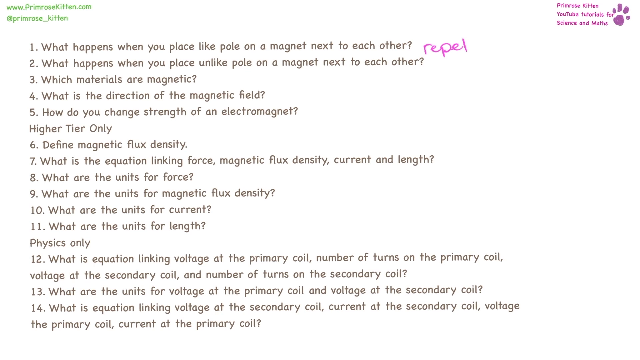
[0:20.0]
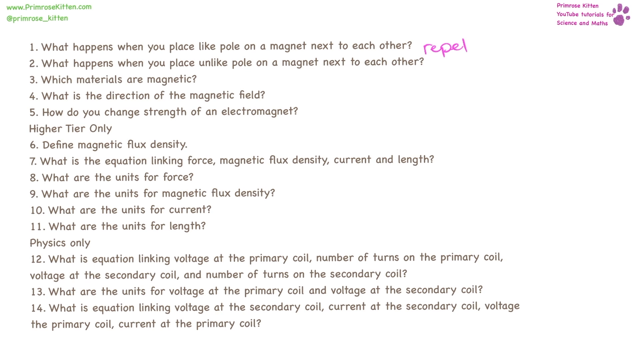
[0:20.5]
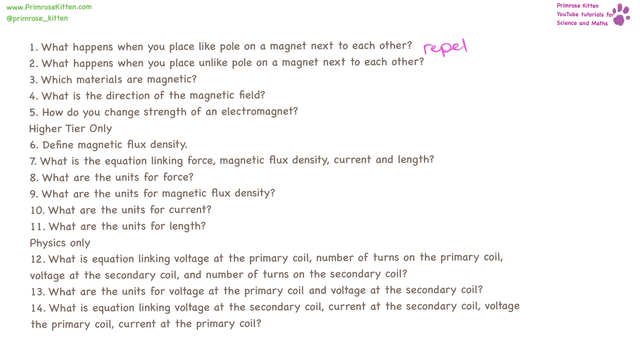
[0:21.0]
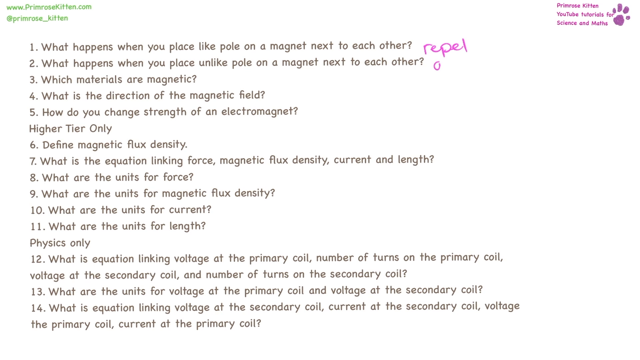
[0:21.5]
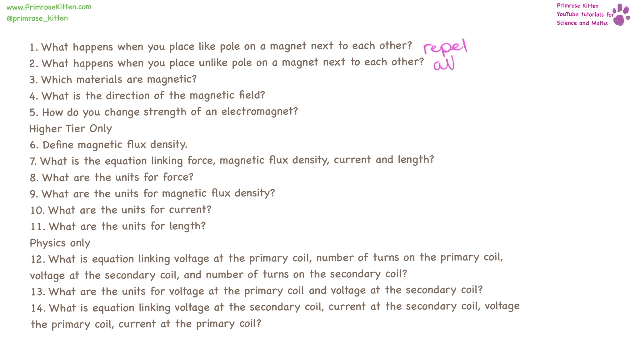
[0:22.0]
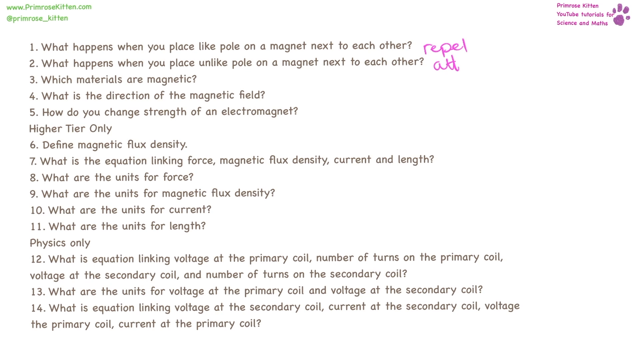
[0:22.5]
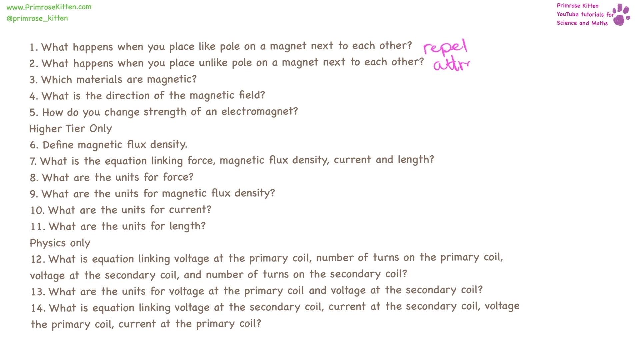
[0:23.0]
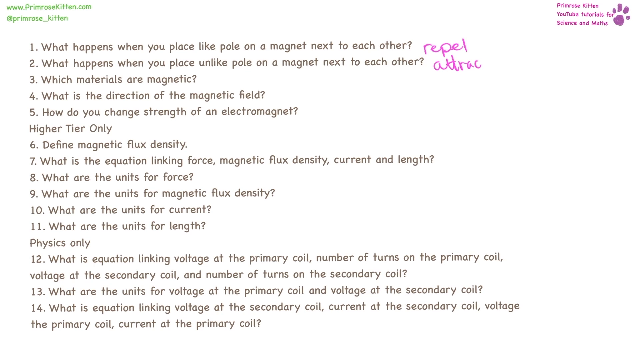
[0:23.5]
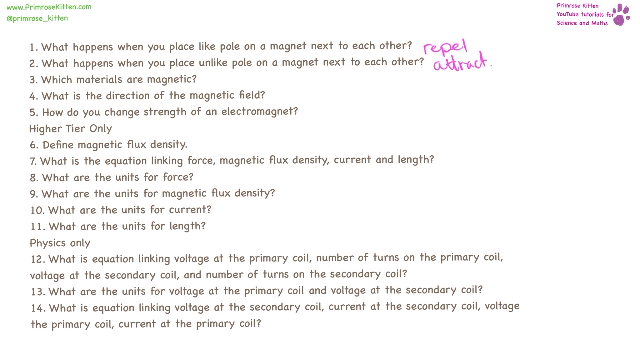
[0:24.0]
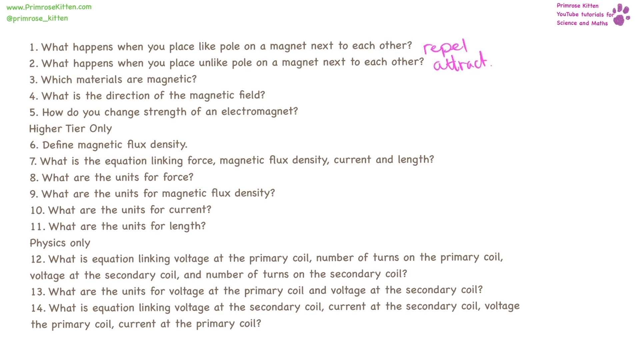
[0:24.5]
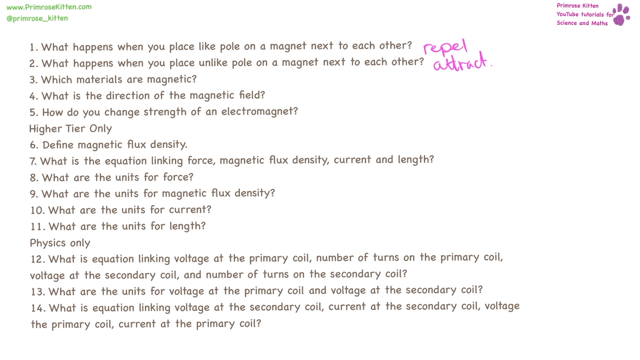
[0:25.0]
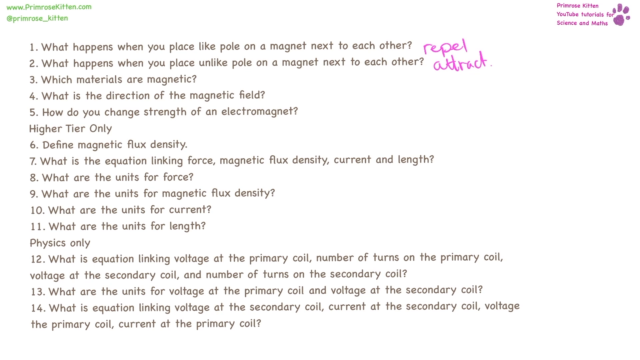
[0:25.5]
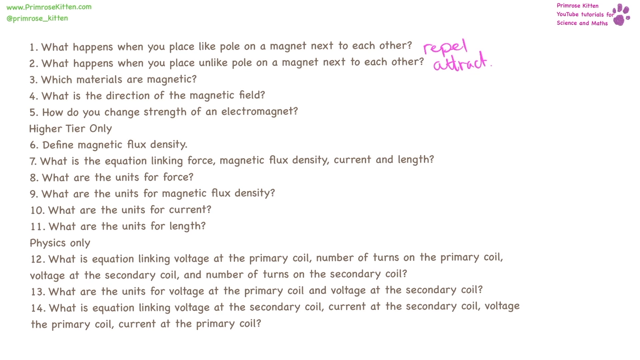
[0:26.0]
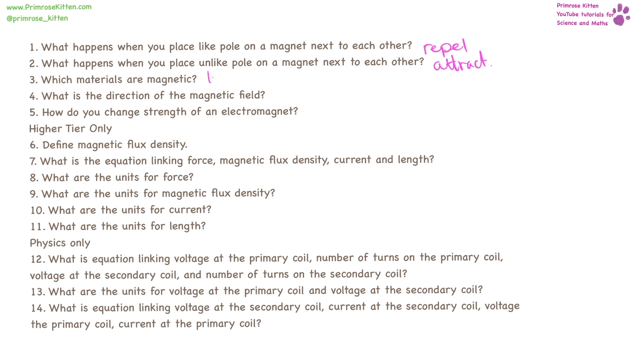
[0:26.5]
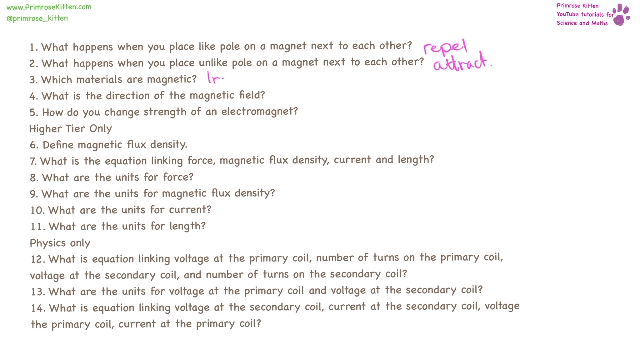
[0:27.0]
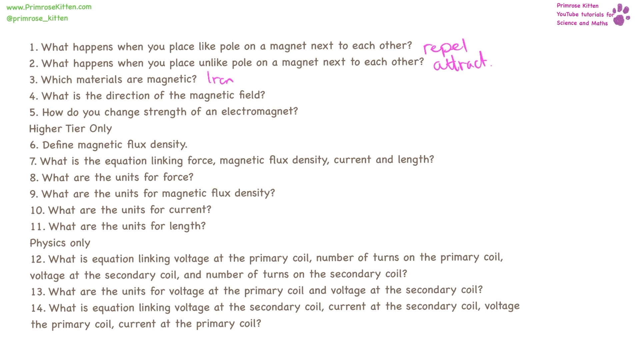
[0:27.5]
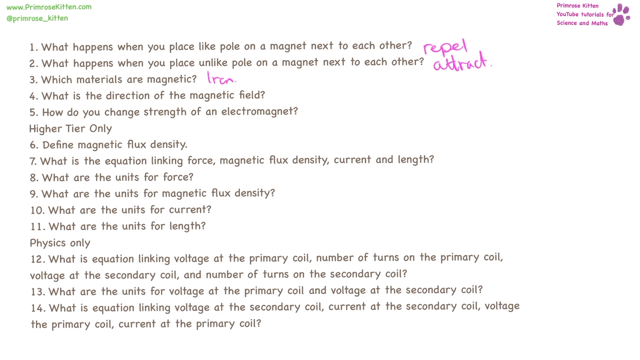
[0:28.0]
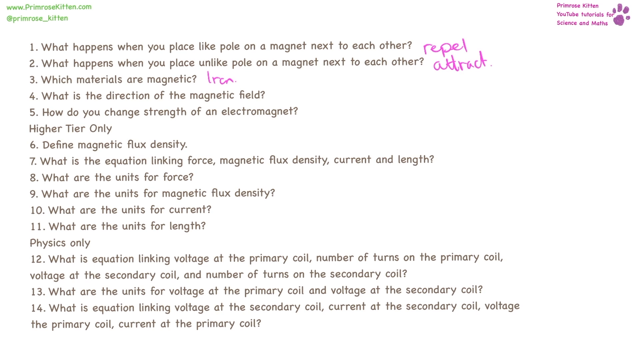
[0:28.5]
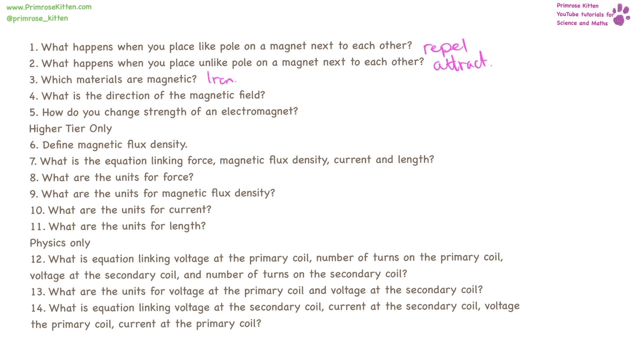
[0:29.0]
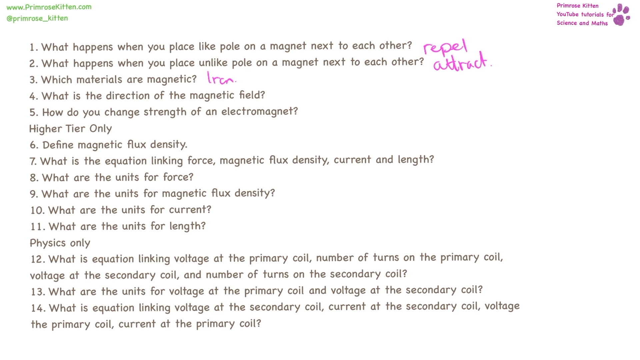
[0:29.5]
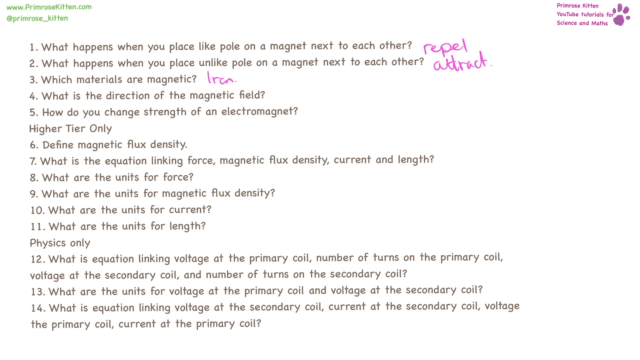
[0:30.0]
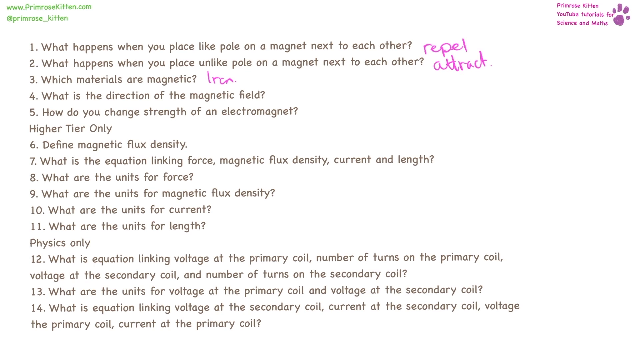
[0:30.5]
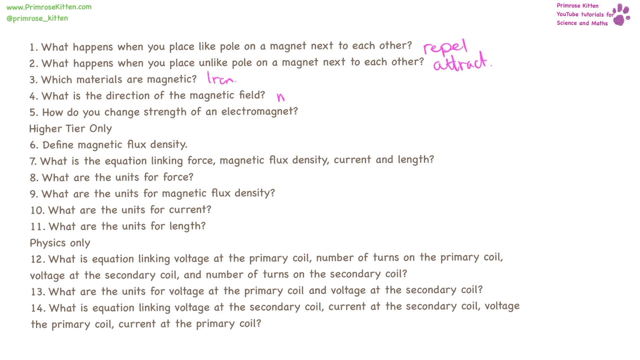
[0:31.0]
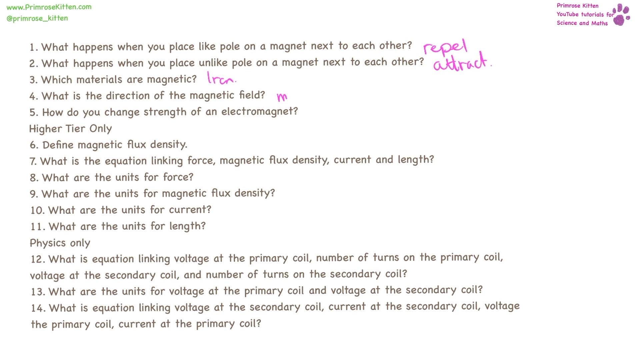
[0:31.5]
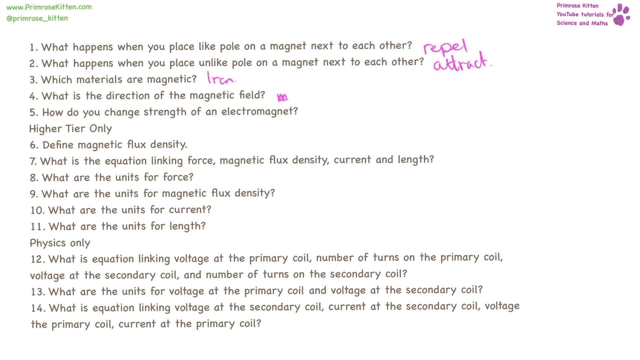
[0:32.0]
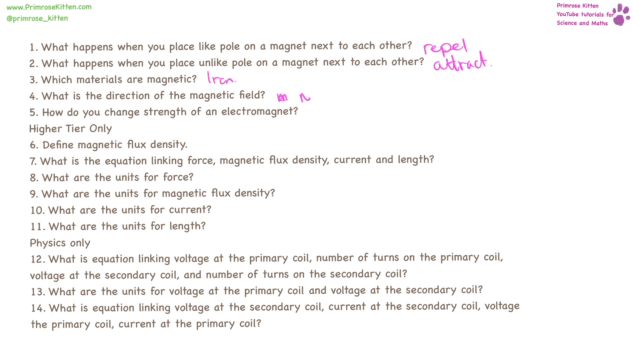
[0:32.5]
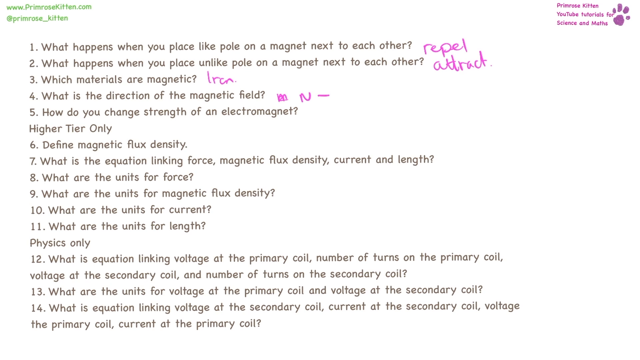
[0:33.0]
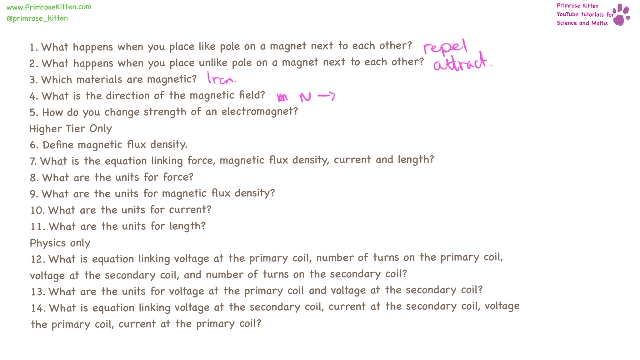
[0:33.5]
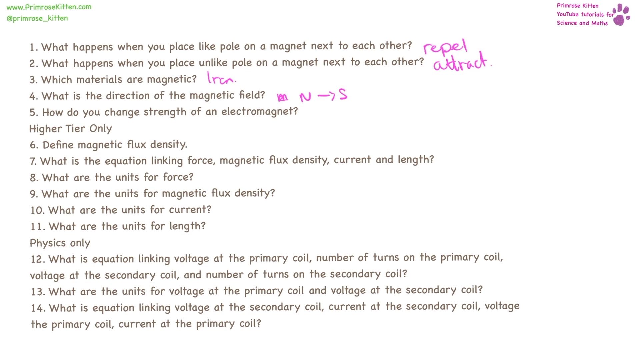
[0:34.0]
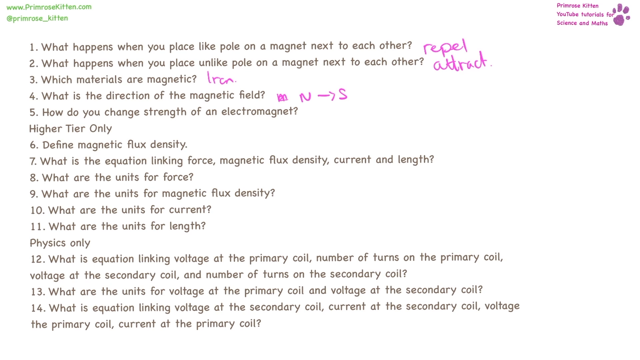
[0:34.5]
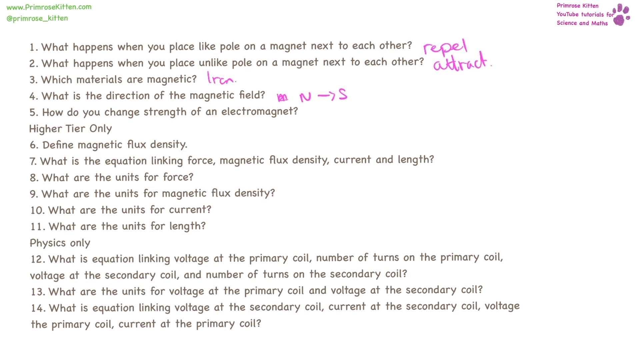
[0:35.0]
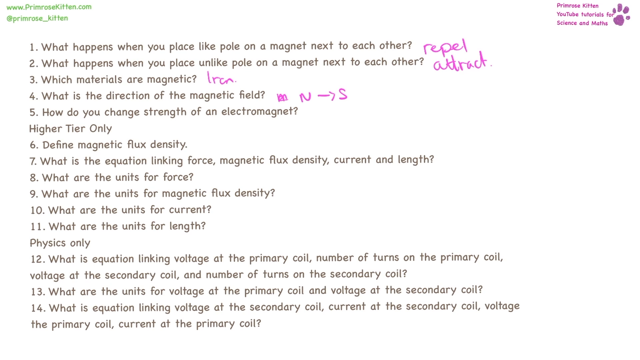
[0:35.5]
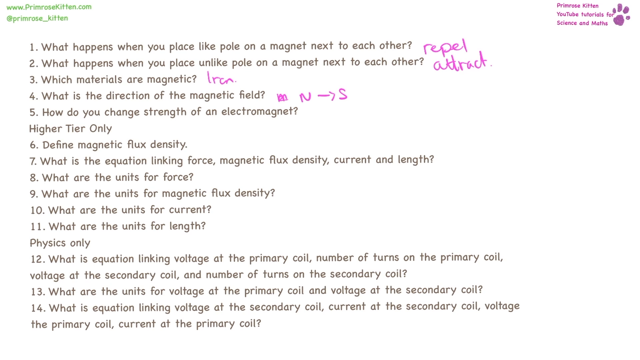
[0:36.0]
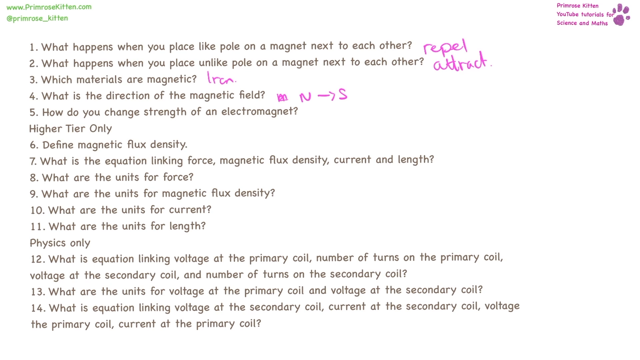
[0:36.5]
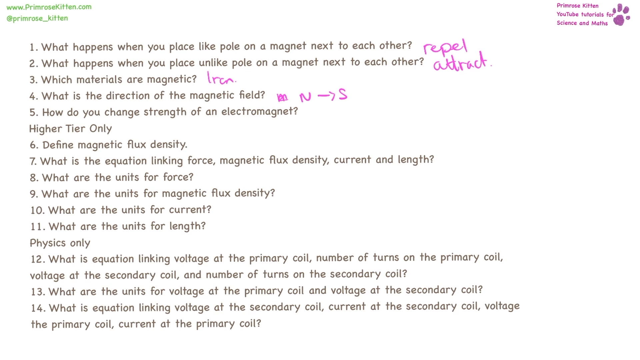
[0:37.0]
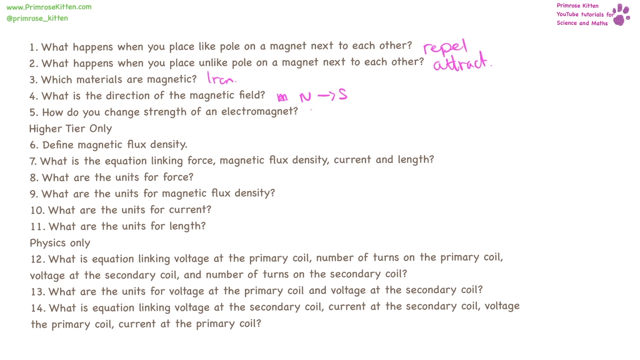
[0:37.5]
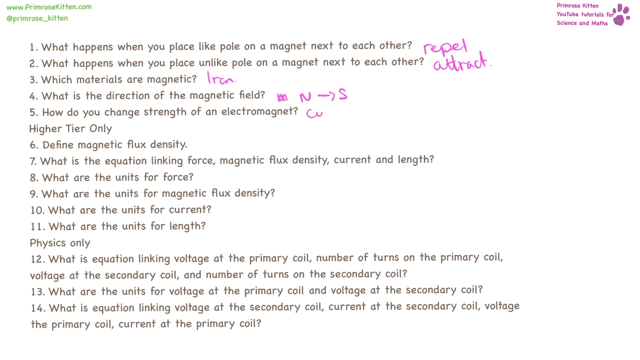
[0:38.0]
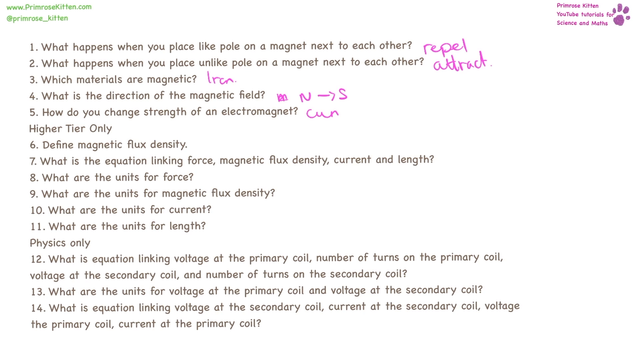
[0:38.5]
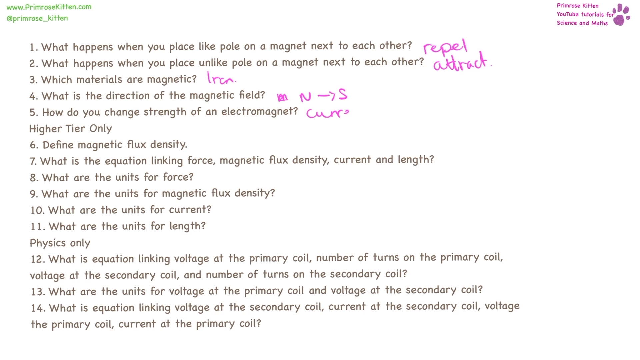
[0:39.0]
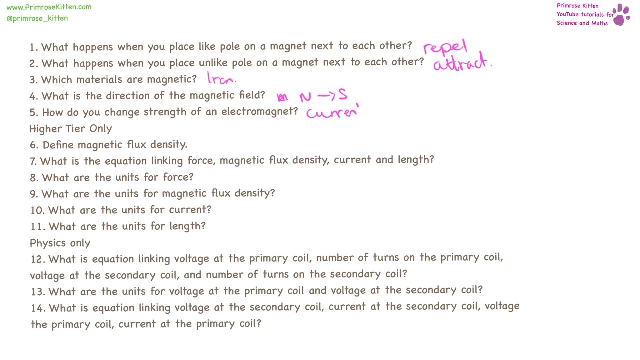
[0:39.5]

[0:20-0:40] A white screen shows about 14 one-line questions about magnets. In the top left, the Primrose Kitten Instagram handle and website appear in small green text, and the logo is in the top right corner. "Repel" is already written in thin red strokes between the first and second questions, probably as a shared answer to both, and "attract" is then written letter by letter below it. The third question, "which materials are magnetic?", is answered "iron" in the same red pen. For the fourth question, about the direction of the magnetic field, a small "m" is written and struck out, then a capital "N → S" is written. For the fifth question, "current," is written.